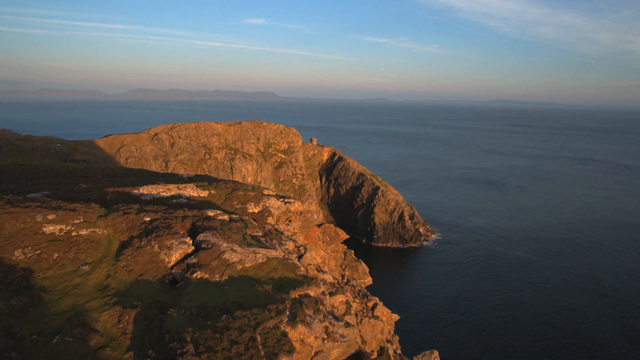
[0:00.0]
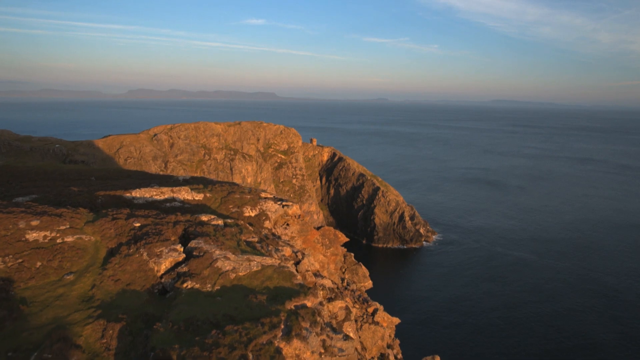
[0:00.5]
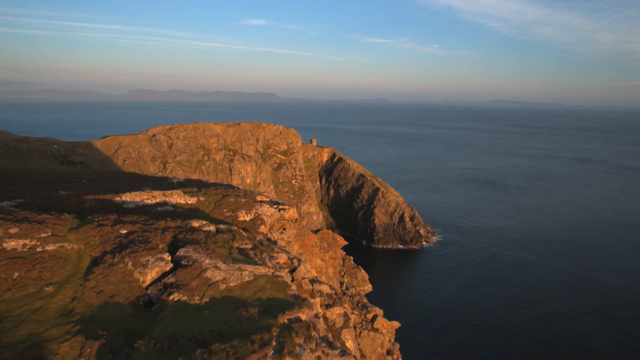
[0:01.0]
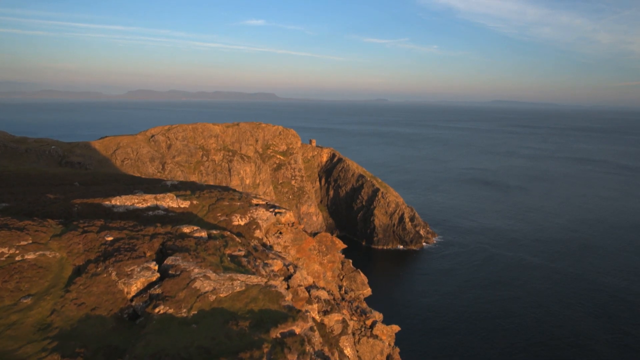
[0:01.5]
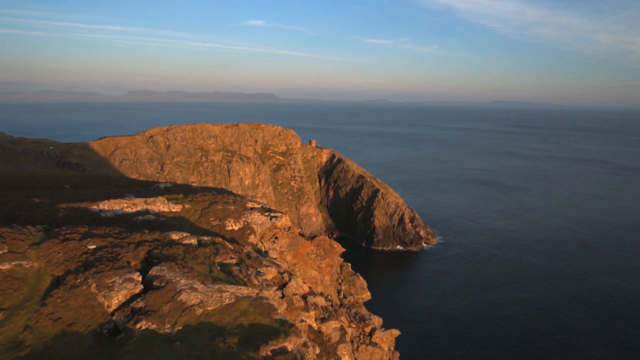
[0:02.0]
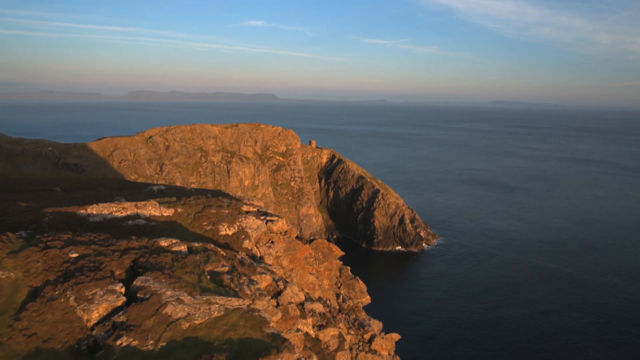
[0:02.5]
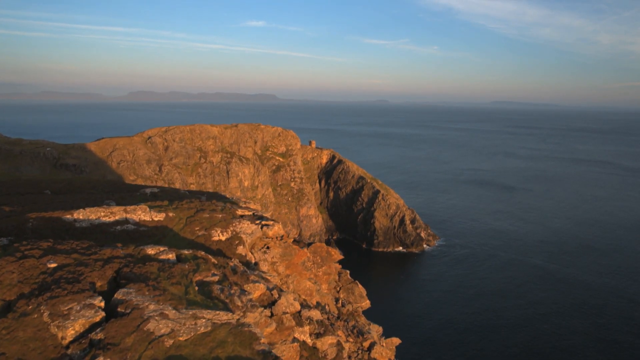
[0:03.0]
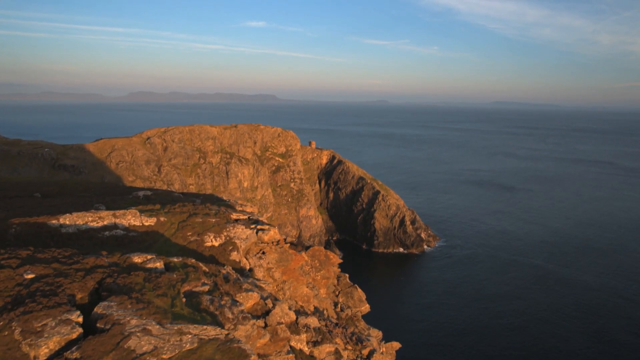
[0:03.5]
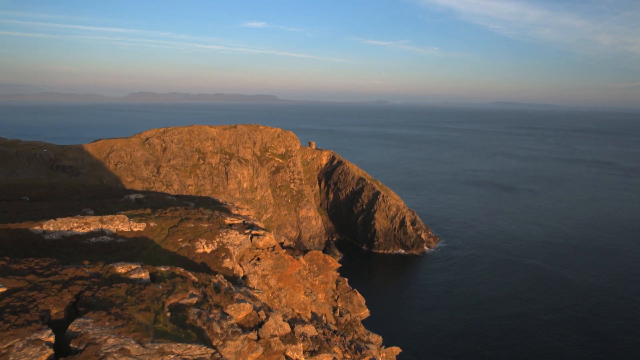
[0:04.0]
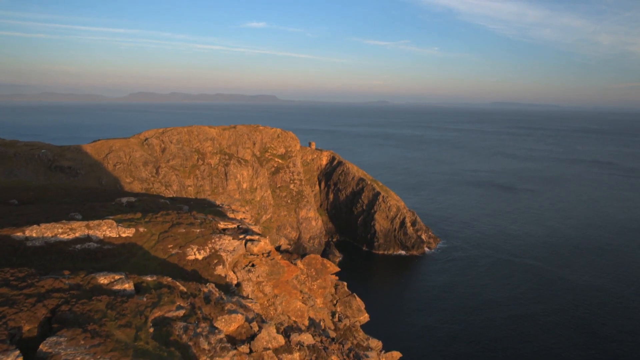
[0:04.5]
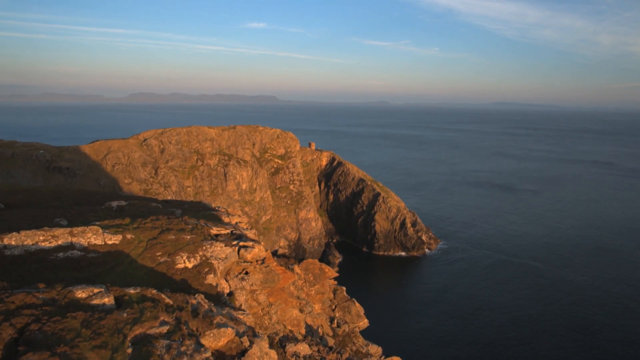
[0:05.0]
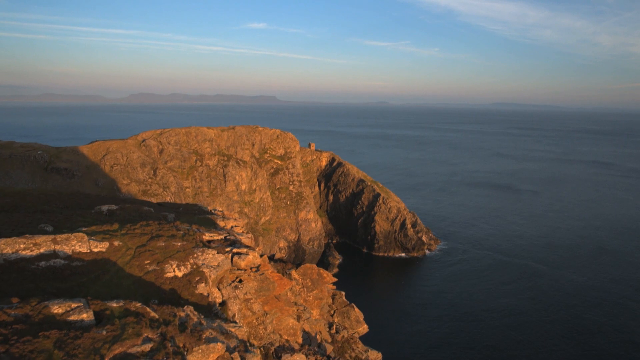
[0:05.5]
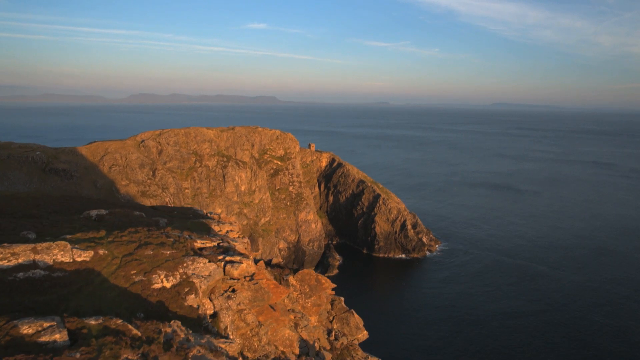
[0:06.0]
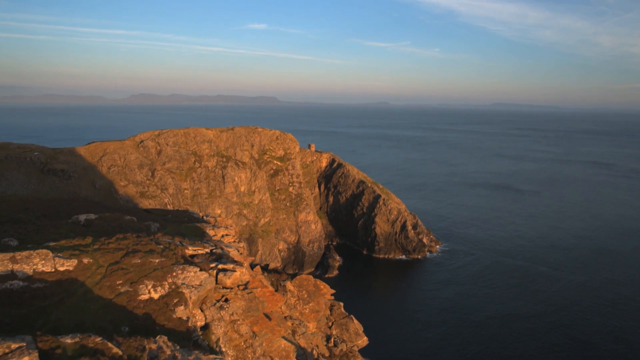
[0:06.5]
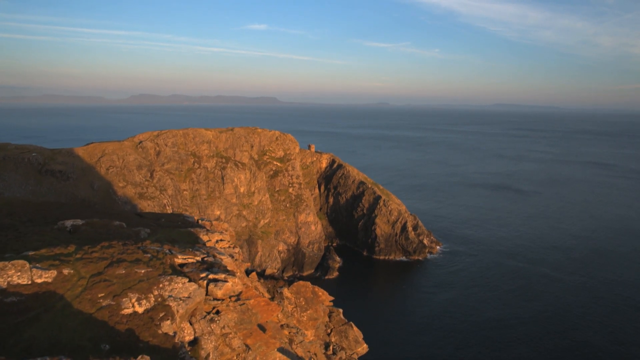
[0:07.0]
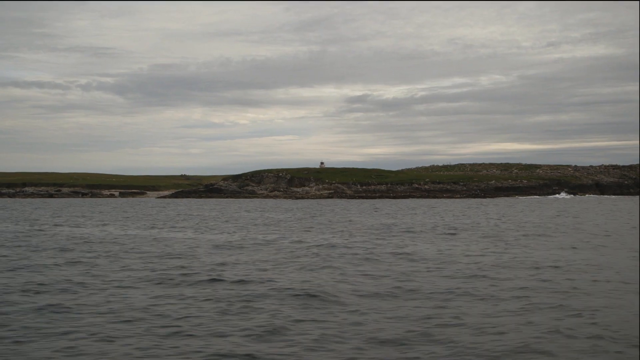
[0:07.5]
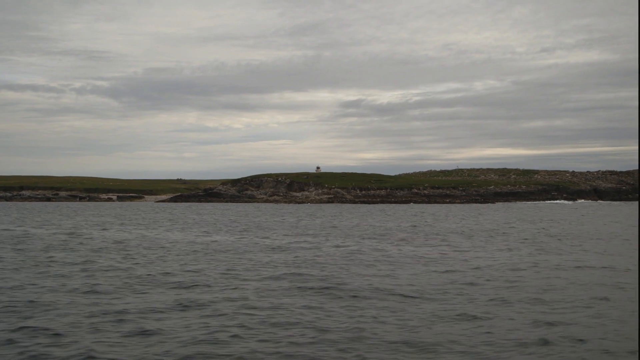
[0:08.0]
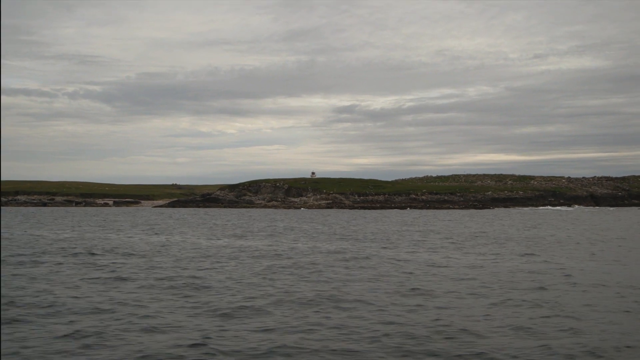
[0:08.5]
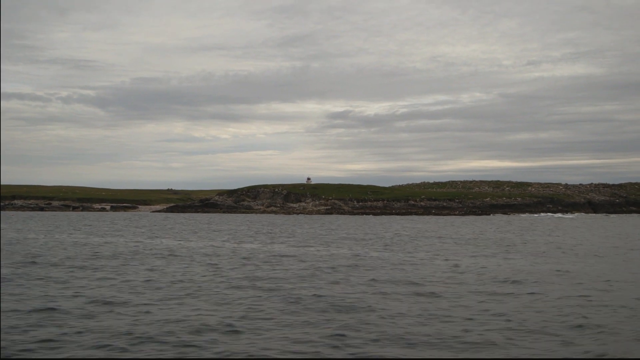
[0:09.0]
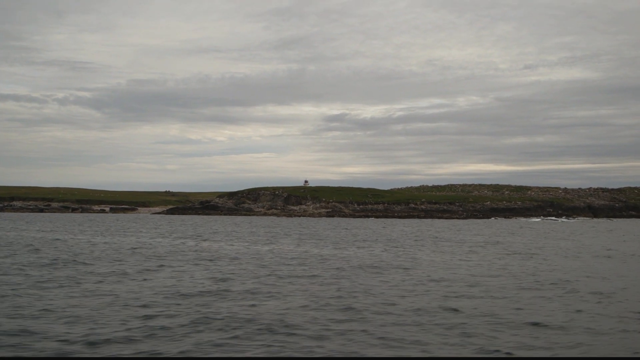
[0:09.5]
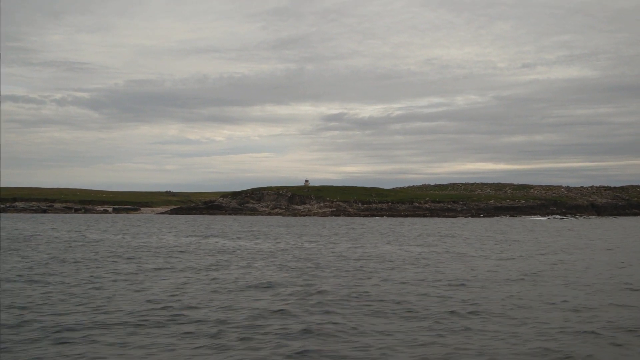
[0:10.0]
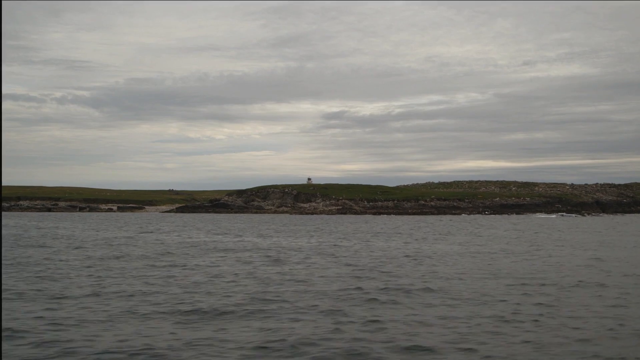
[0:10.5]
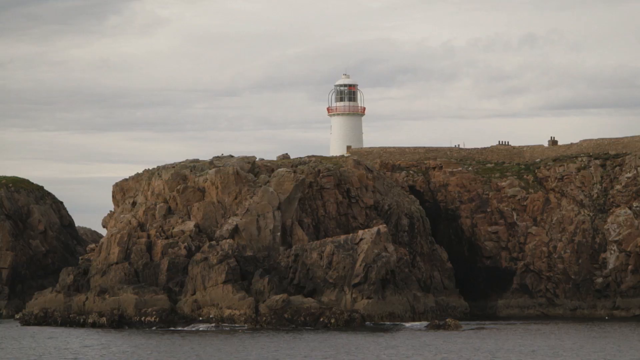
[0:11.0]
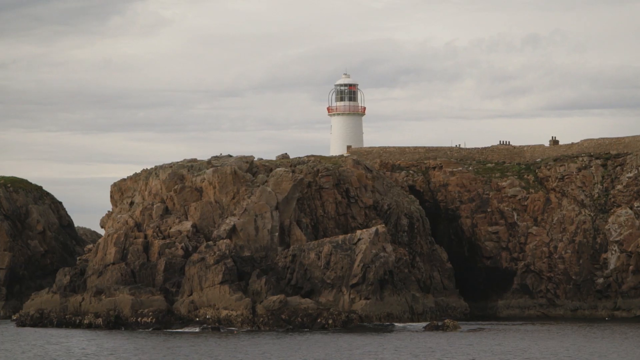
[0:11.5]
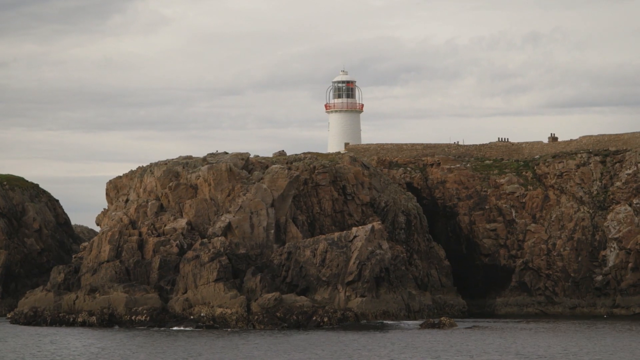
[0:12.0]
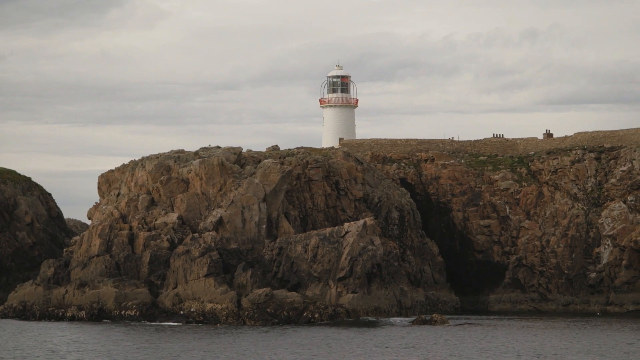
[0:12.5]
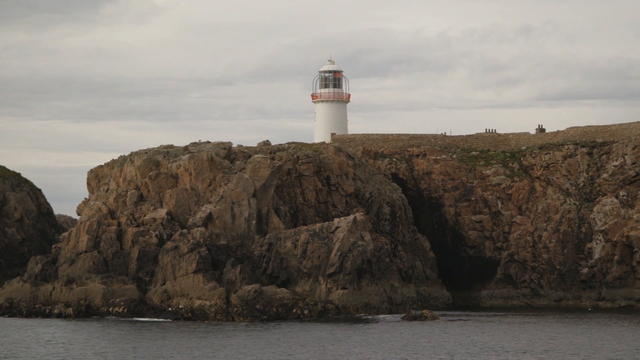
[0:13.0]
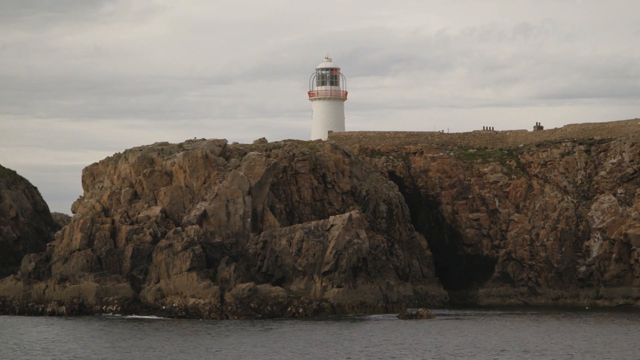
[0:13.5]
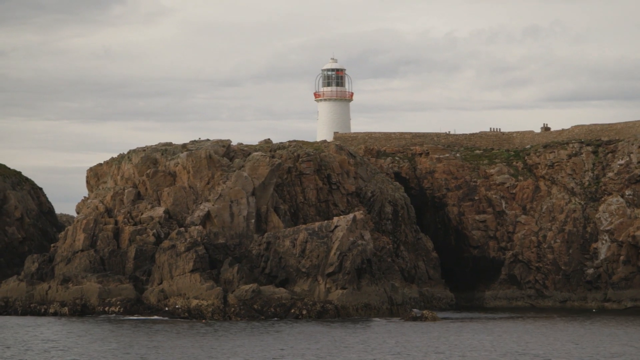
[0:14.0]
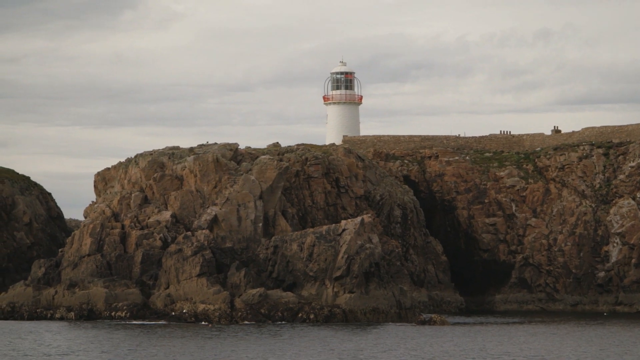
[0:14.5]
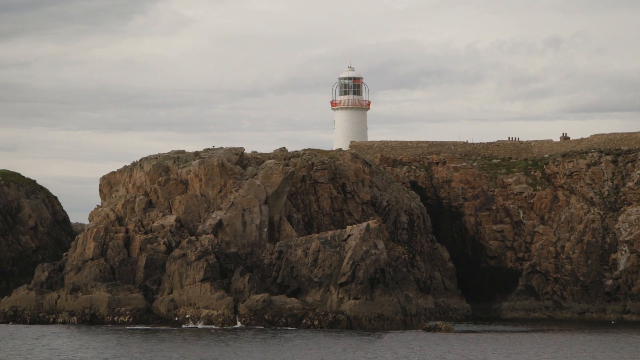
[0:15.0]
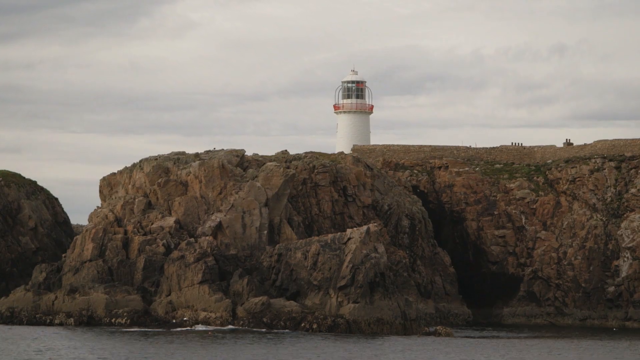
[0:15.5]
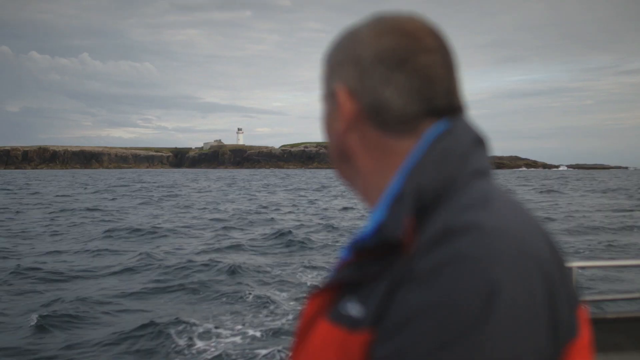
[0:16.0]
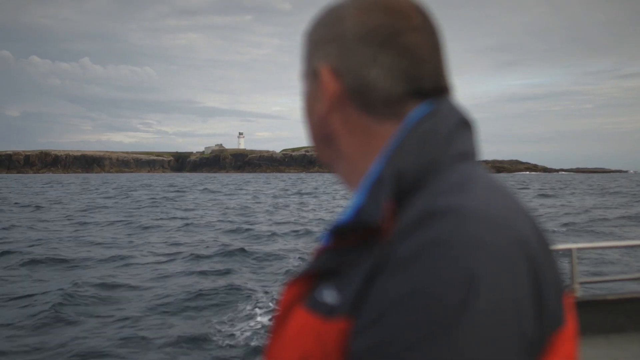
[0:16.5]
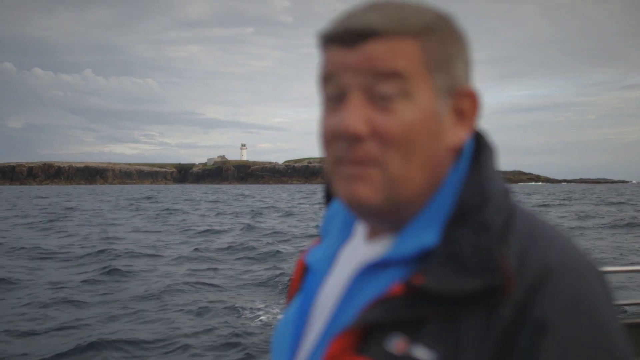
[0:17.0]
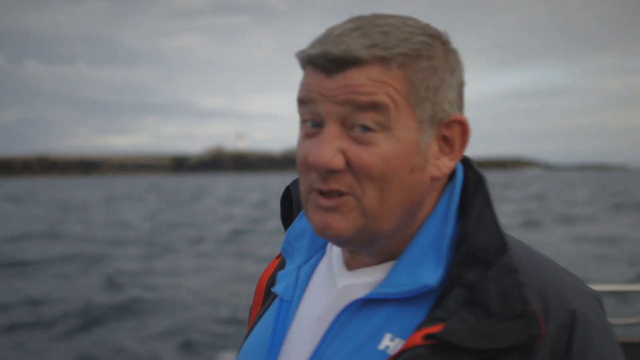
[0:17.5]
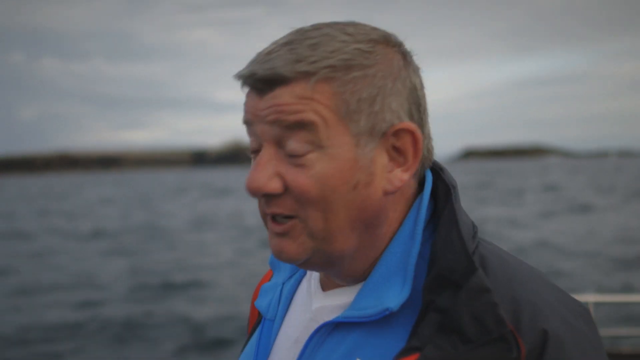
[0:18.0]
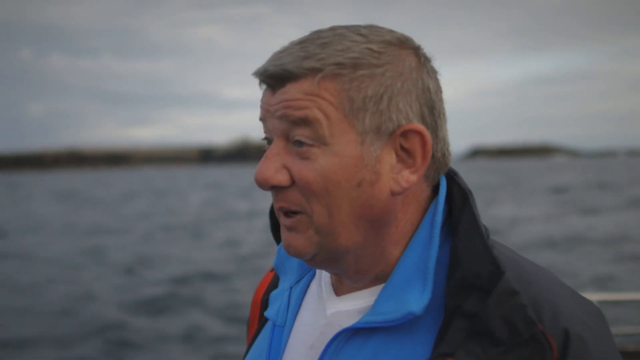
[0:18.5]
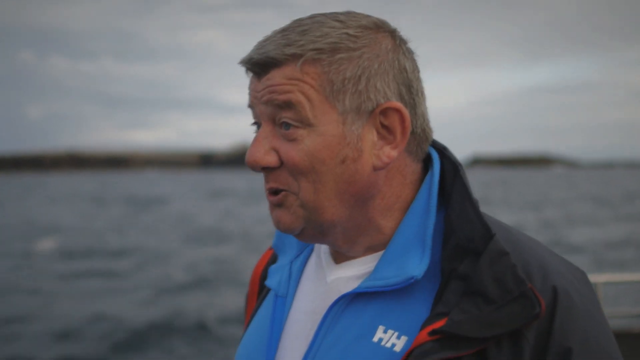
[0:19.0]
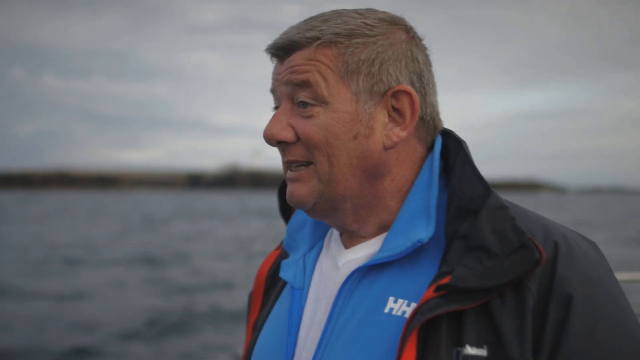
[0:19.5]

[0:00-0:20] The video opens on a mountainous shoreline, possibly in Ireland or Scotland, or off the coast of England. A white lighthouse is on top of one of the plateaus. The sky overhead is gray, and it looks like a big storm is about to come. A man on a boat sailing away from the lighthouse speaks directly to the camera, apparently about the lighthouse and the island plateau.